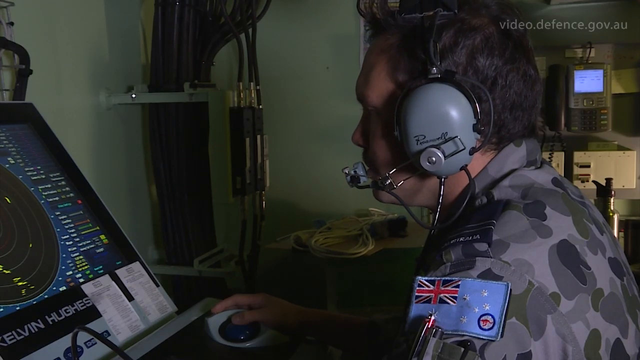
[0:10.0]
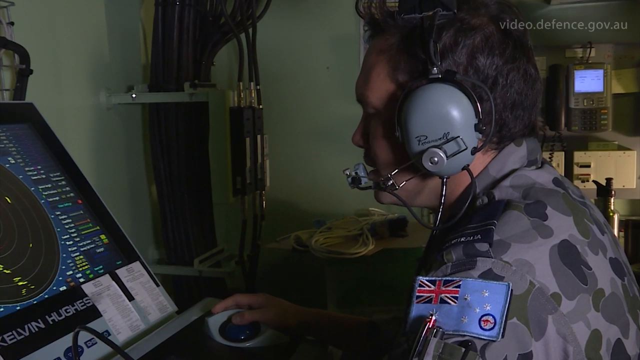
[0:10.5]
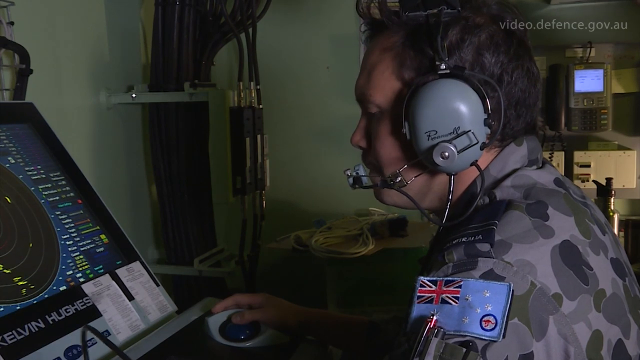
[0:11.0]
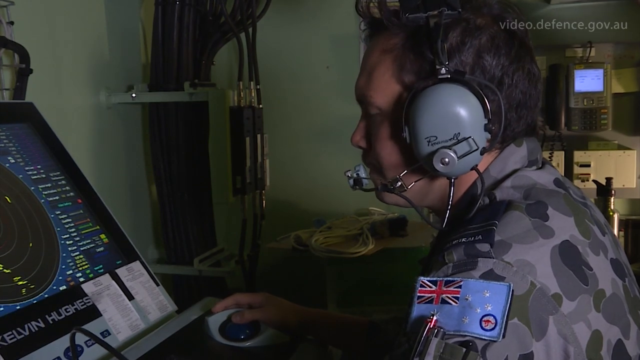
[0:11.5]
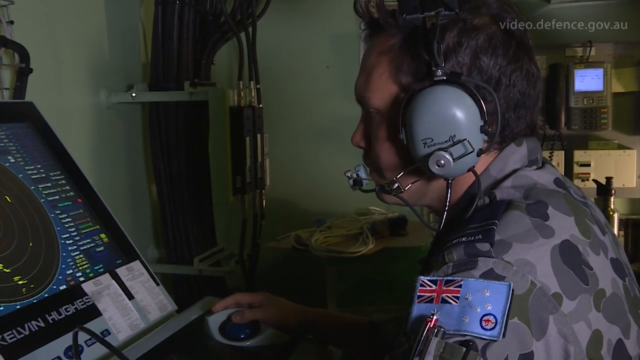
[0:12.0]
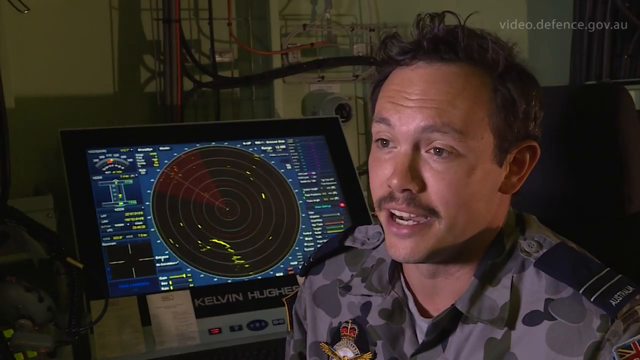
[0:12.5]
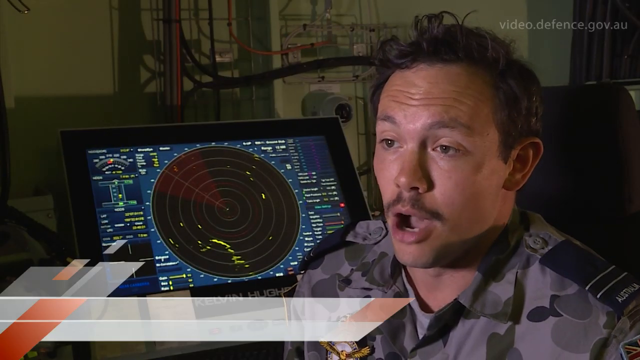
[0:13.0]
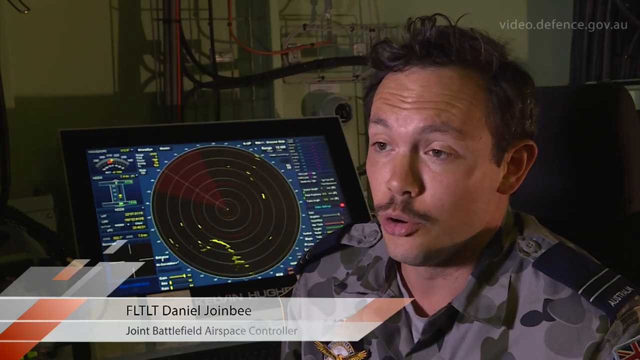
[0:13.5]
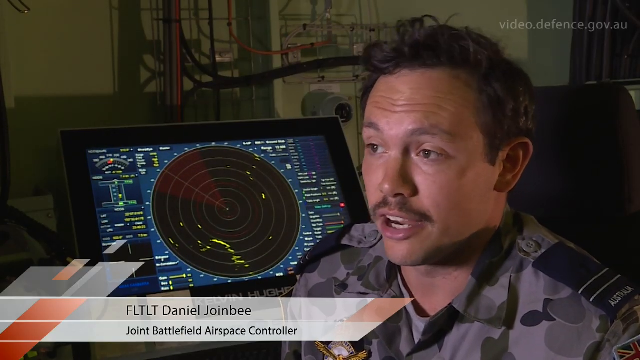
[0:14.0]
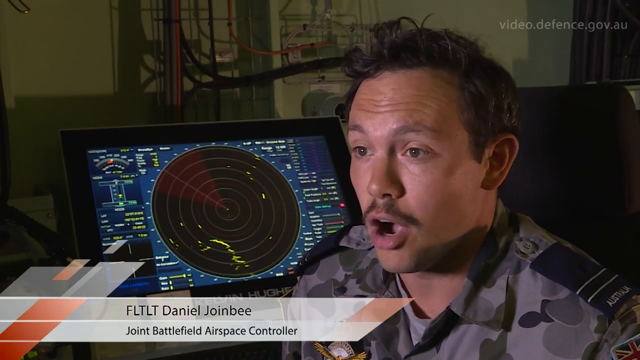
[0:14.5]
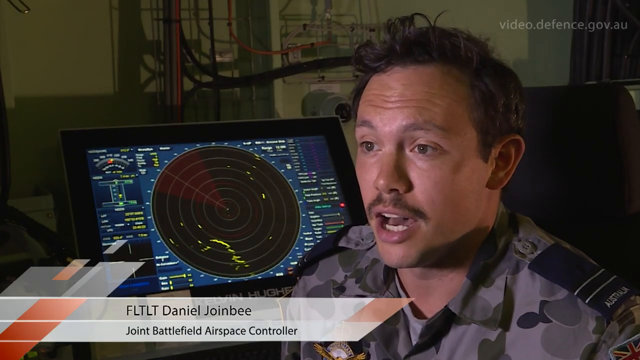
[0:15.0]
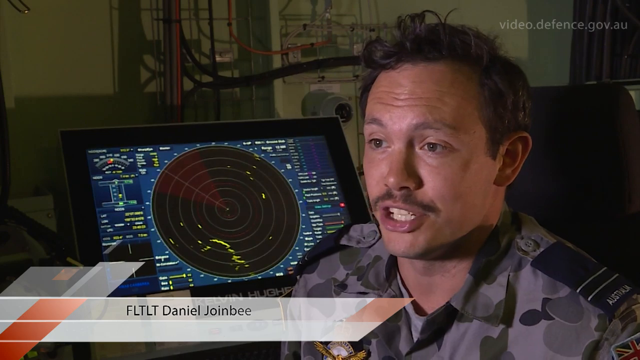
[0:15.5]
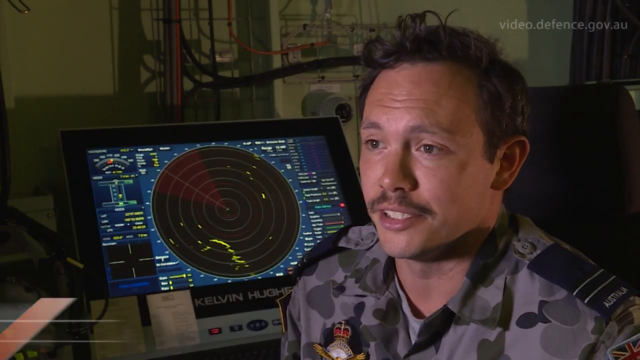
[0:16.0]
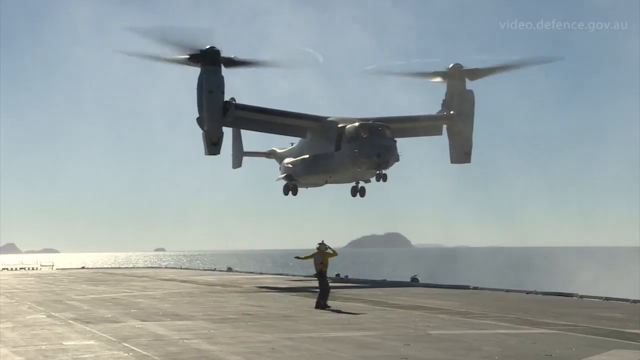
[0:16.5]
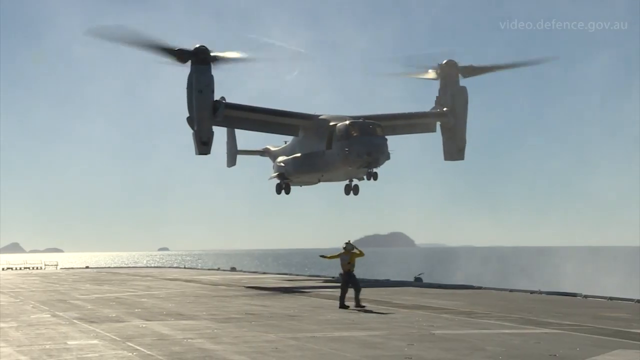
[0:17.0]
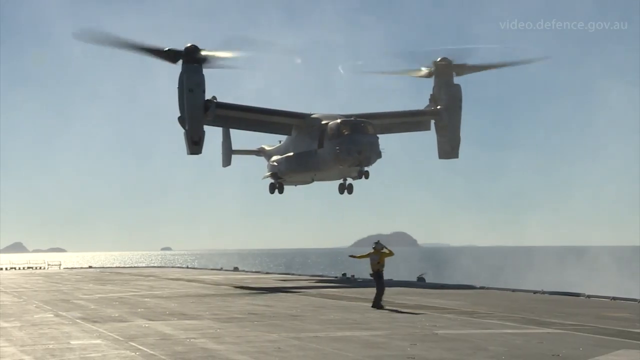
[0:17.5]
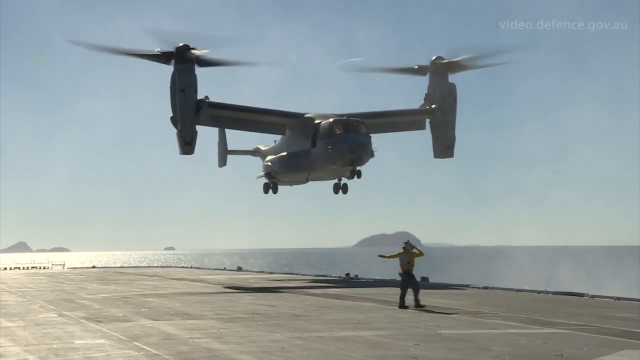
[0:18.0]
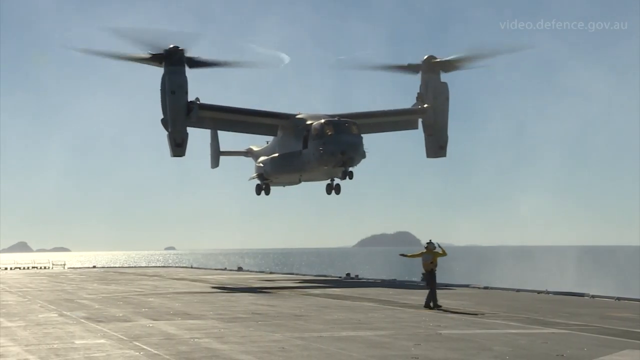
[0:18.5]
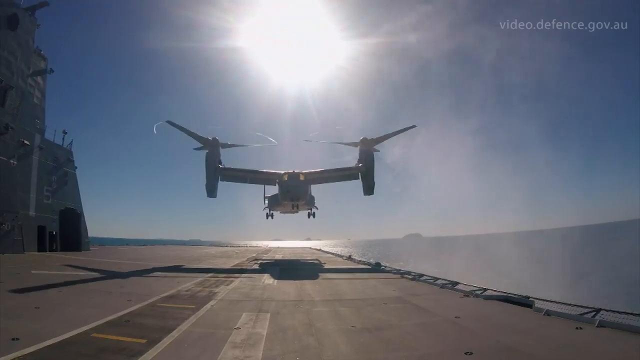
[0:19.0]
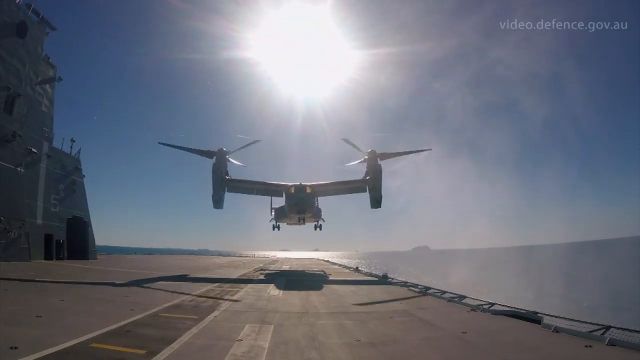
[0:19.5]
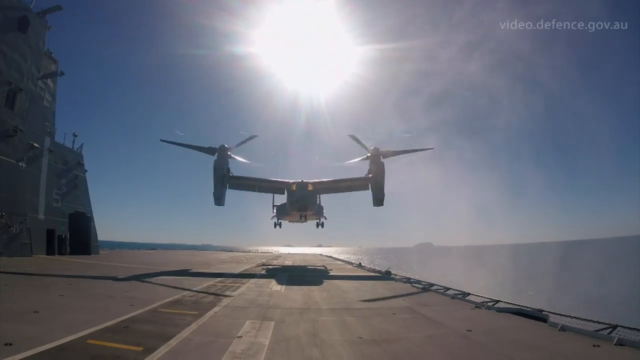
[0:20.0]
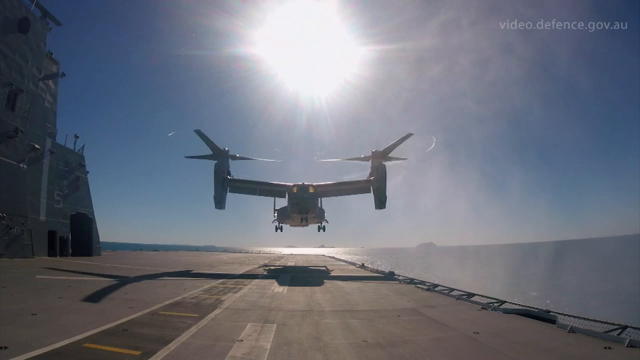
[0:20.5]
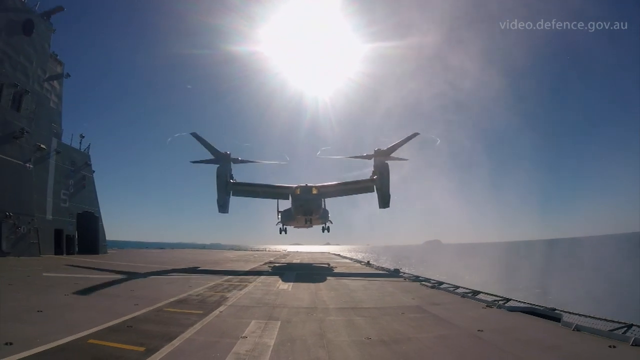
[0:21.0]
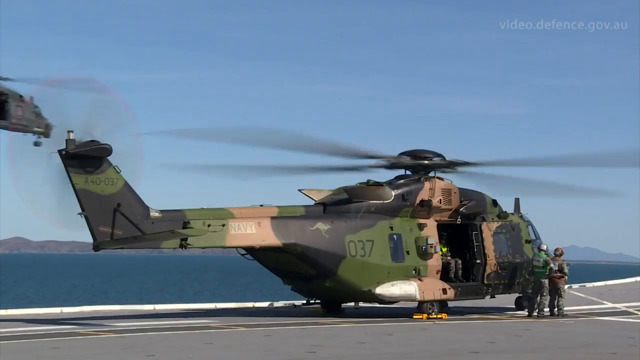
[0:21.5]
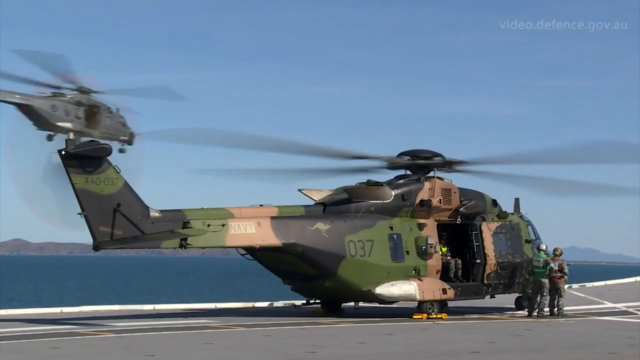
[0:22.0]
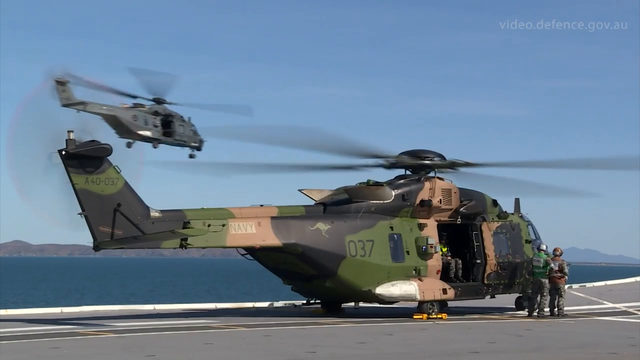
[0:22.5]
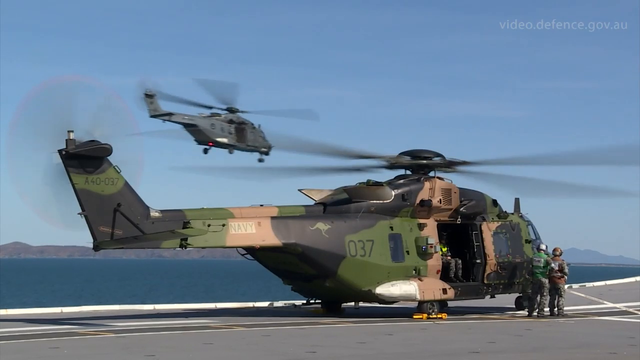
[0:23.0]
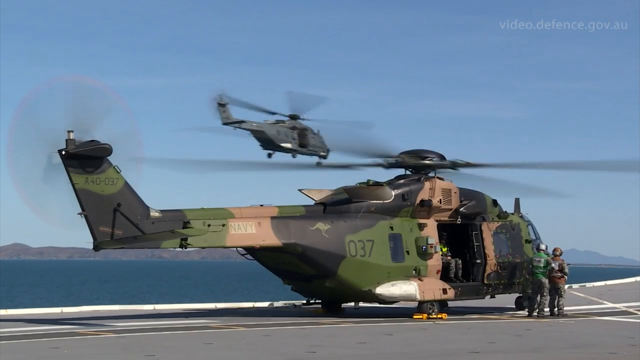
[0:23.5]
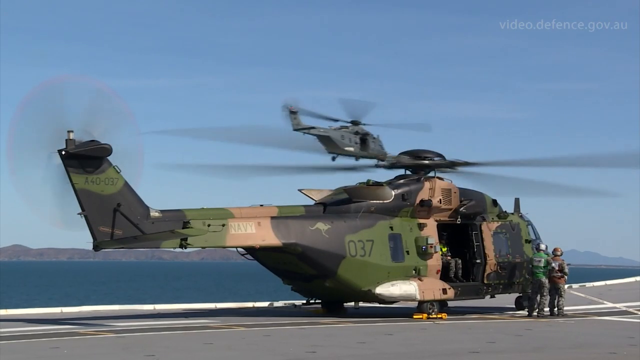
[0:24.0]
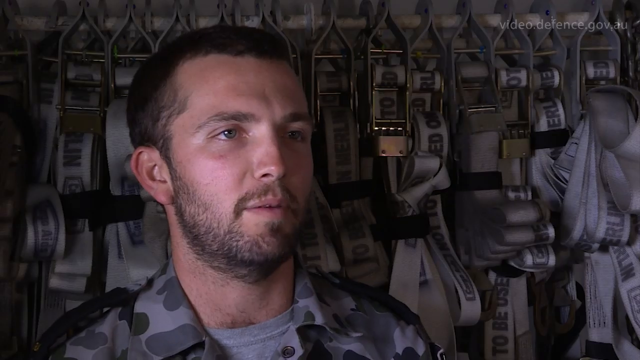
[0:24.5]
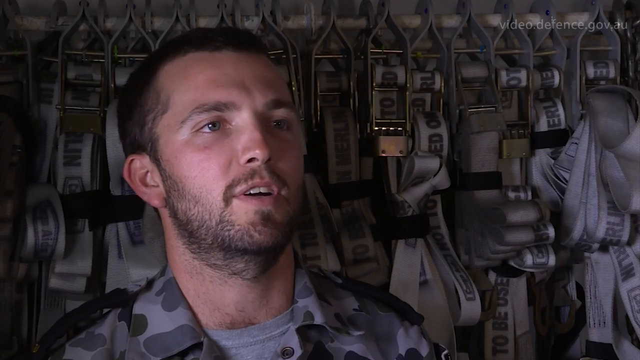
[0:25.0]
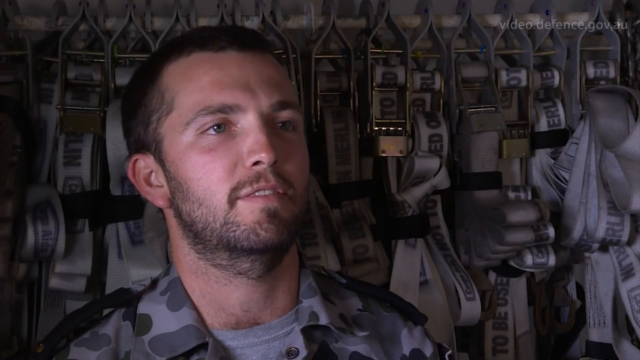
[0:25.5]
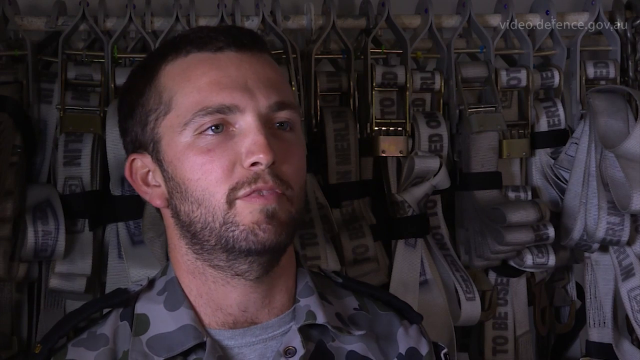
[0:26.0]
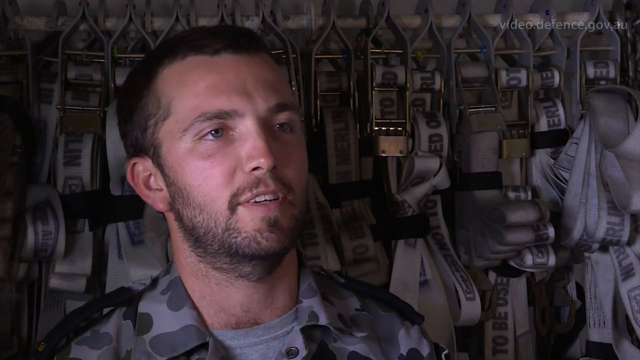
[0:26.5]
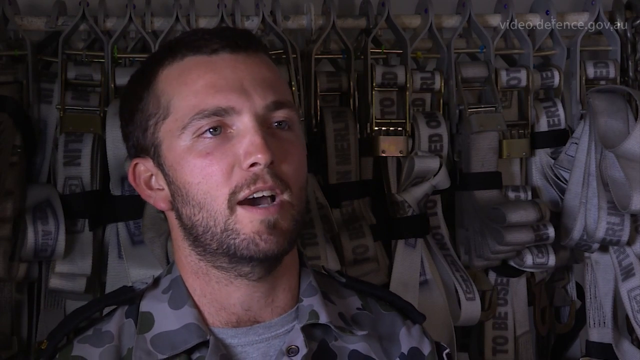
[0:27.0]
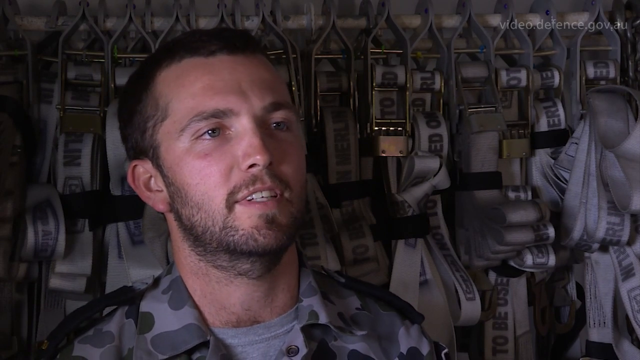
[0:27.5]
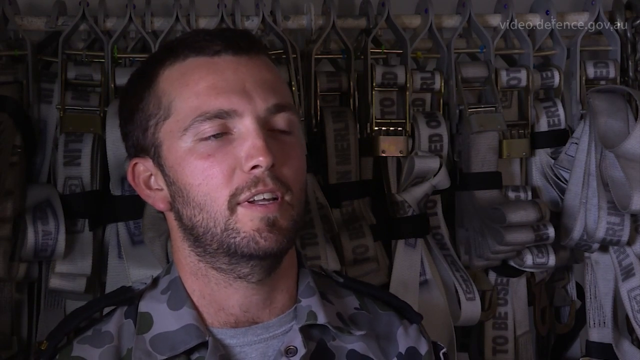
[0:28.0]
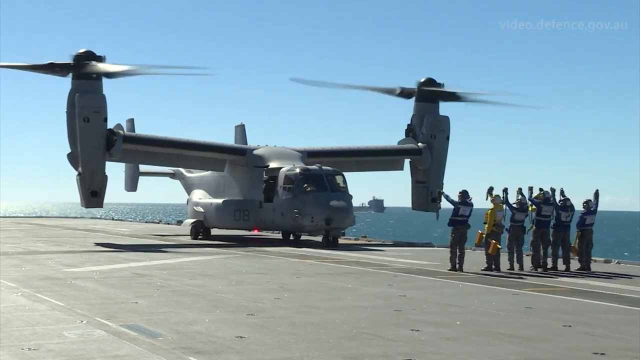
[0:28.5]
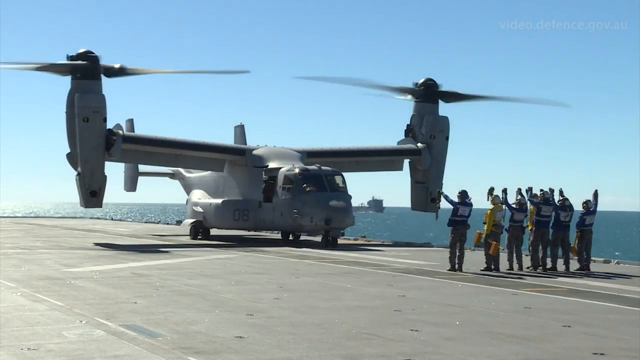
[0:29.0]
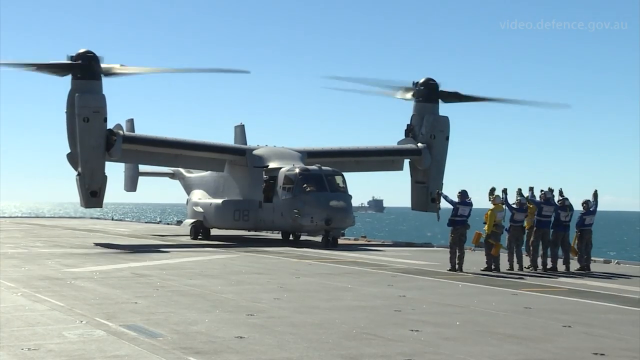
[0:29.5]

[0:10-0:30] A man sits indoors wearing a grey and black uniform with black camouflage shapes. He has light skin, short dark hair and a mustache. Behind him is a glowing, round screen with green and red colors, almost like a radar, and there are also yellow and blue lights. The man looks calm. The picture then shifts to a large aircraft outside with two rotors, flying above the deck. The view changes again, and the aircraft has landed on a deck. On the right side, many people in uniforms stand in a group with their arms raised high, waving. The sea behind them is deep blue and very calm, and the sky is clear. The aircraft is dark grey with white wings and spinning rotors.